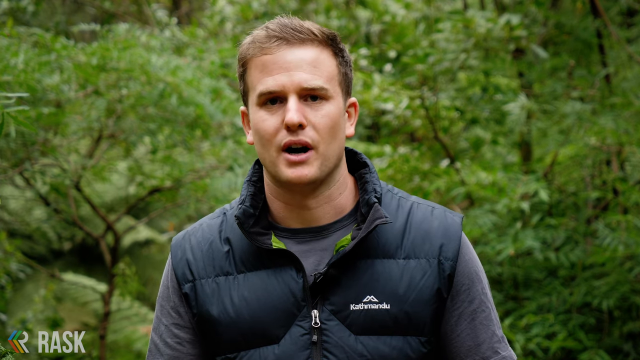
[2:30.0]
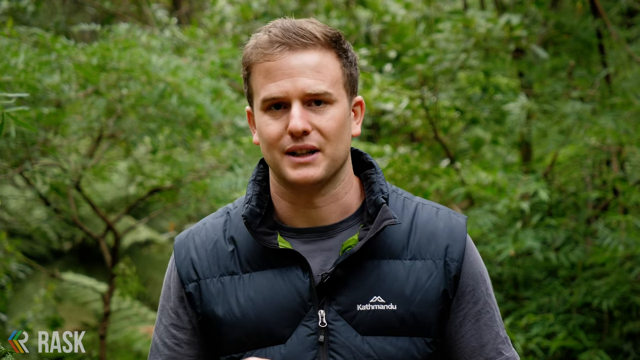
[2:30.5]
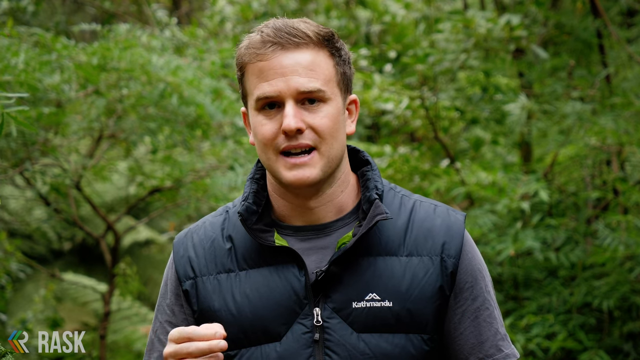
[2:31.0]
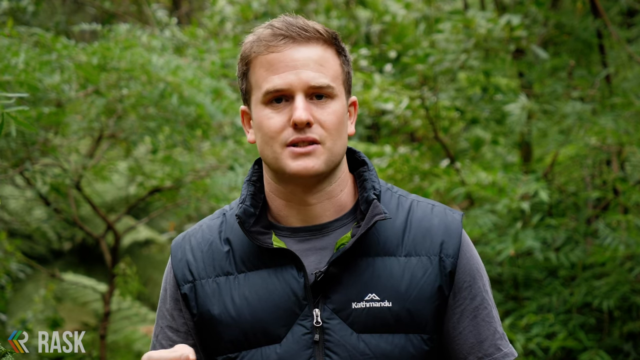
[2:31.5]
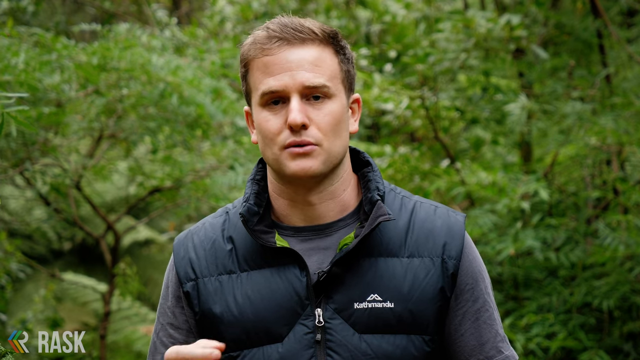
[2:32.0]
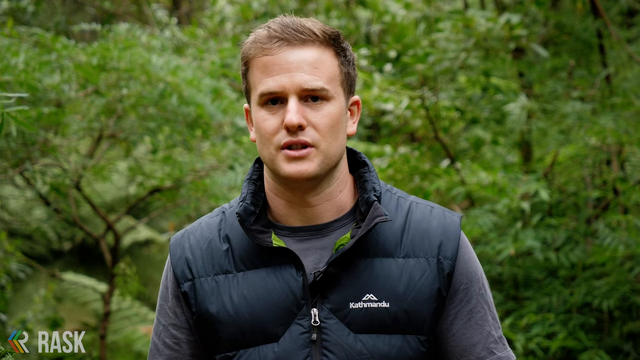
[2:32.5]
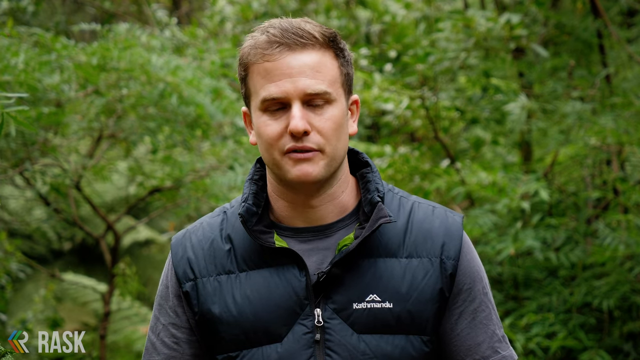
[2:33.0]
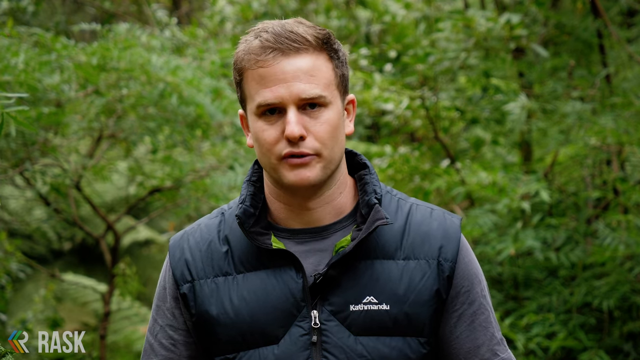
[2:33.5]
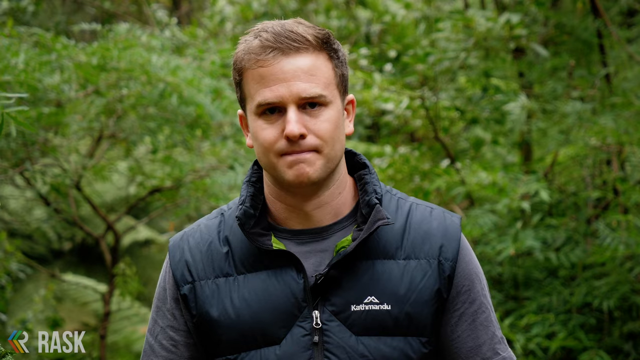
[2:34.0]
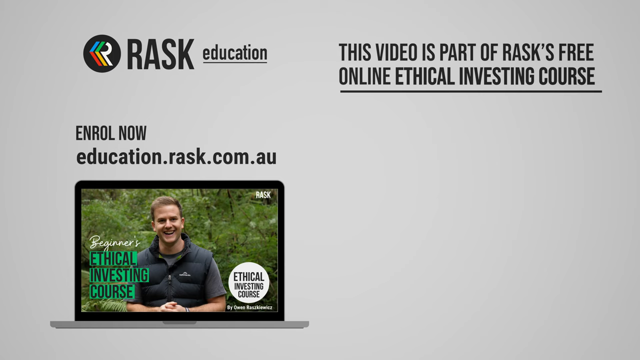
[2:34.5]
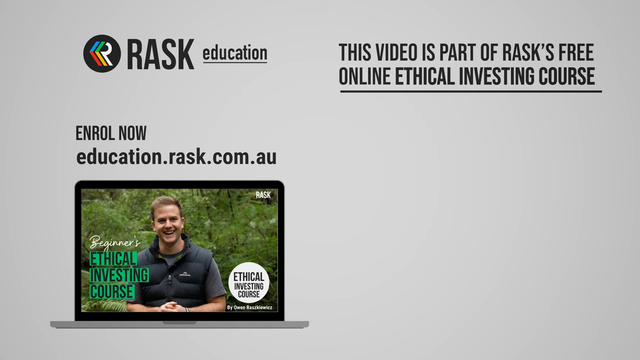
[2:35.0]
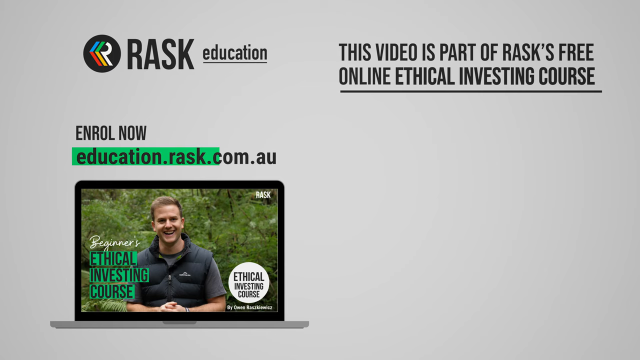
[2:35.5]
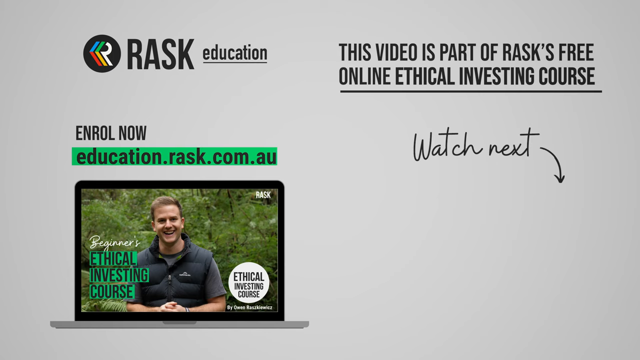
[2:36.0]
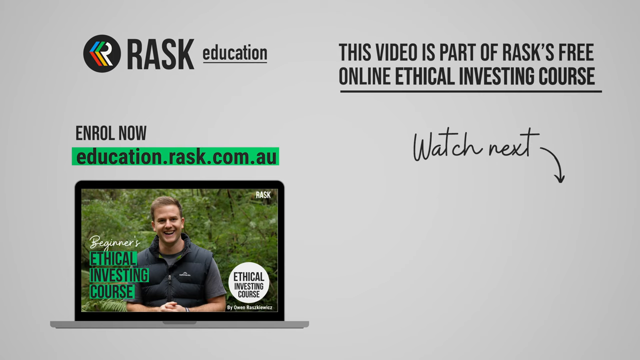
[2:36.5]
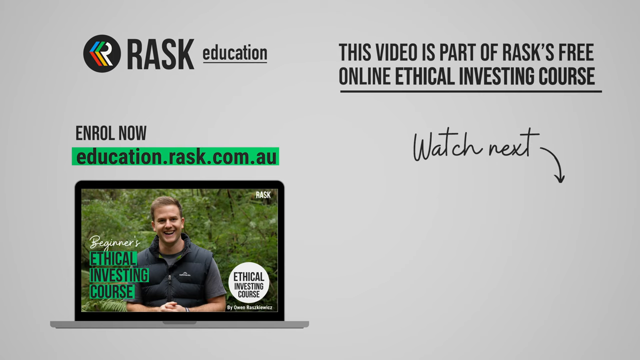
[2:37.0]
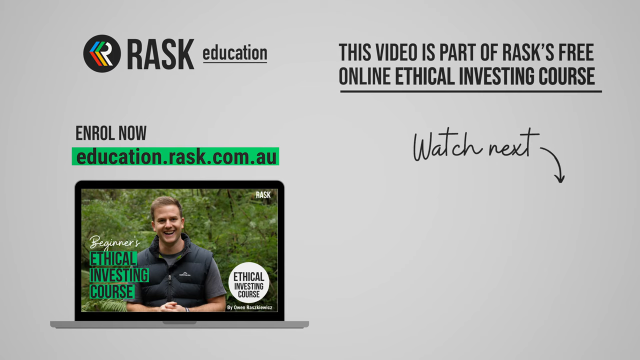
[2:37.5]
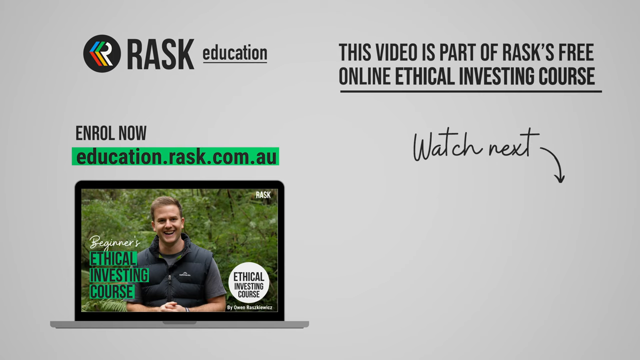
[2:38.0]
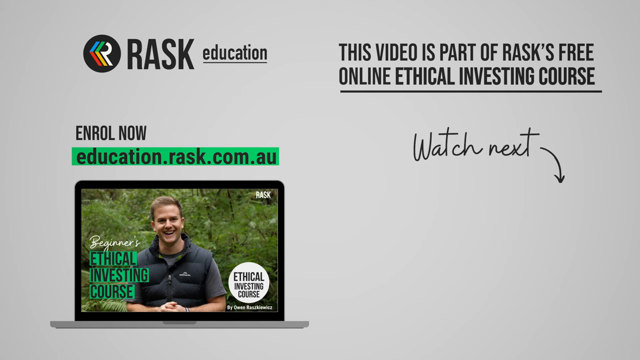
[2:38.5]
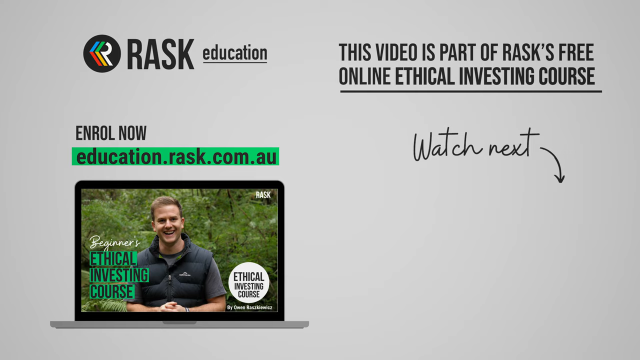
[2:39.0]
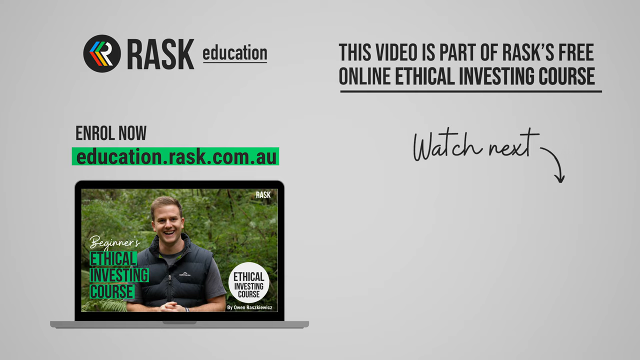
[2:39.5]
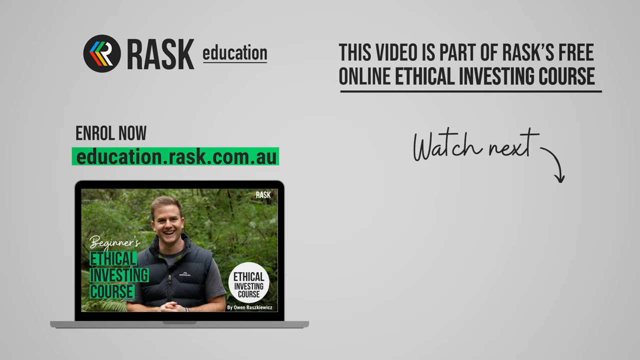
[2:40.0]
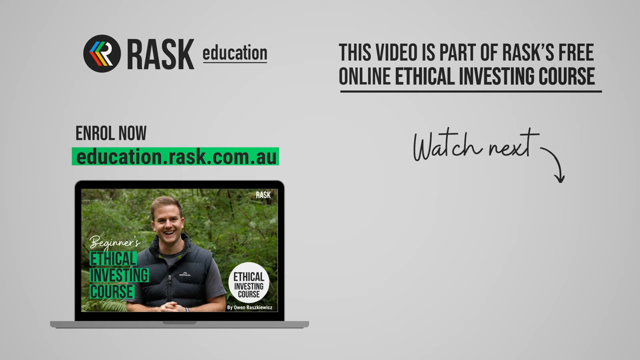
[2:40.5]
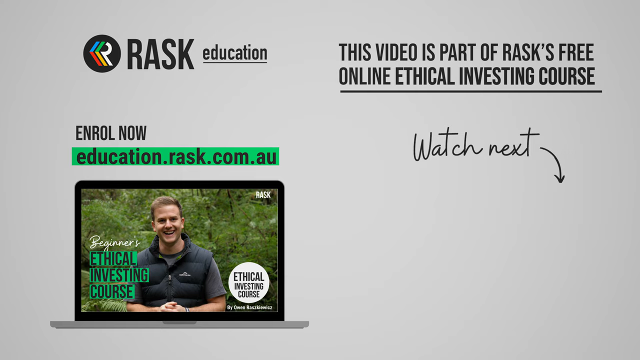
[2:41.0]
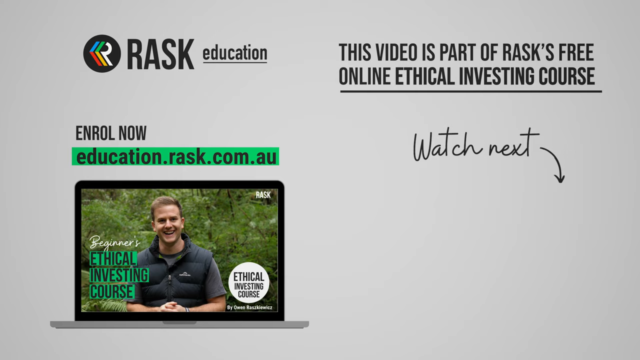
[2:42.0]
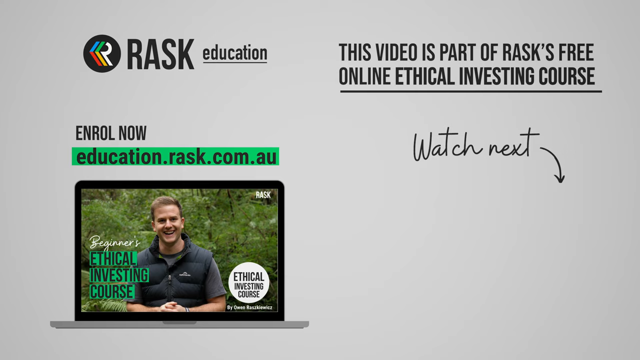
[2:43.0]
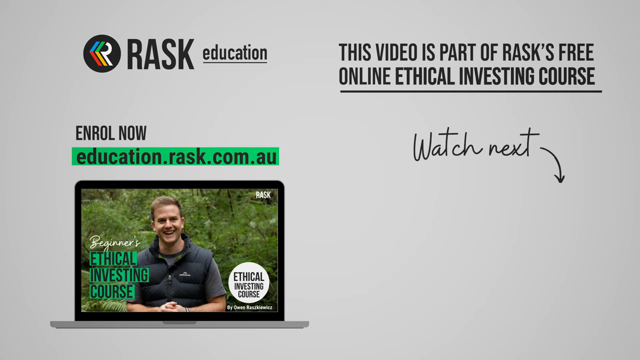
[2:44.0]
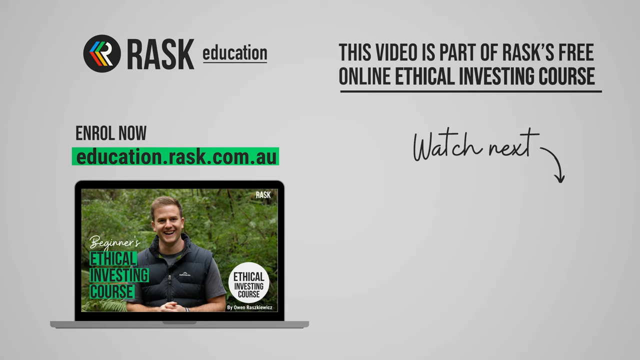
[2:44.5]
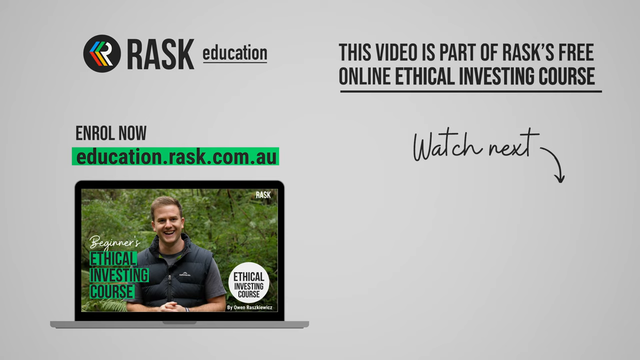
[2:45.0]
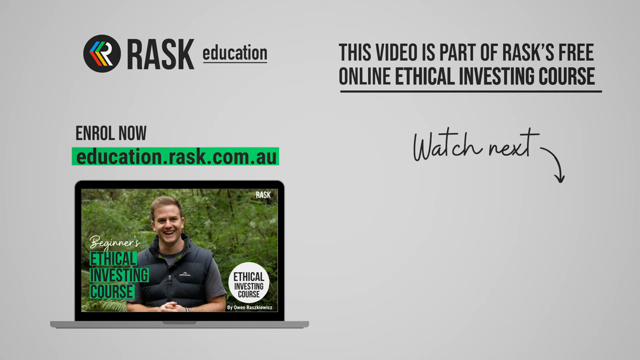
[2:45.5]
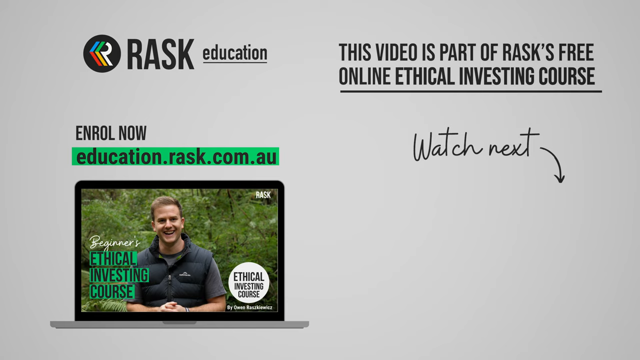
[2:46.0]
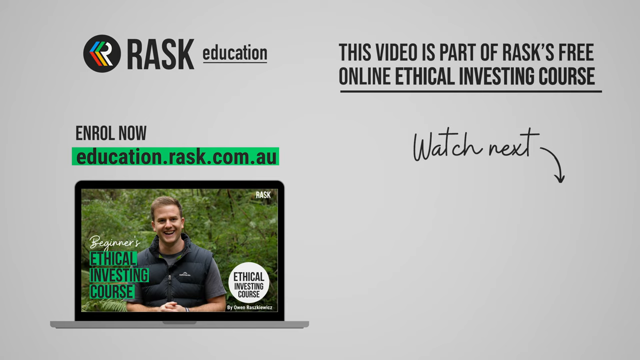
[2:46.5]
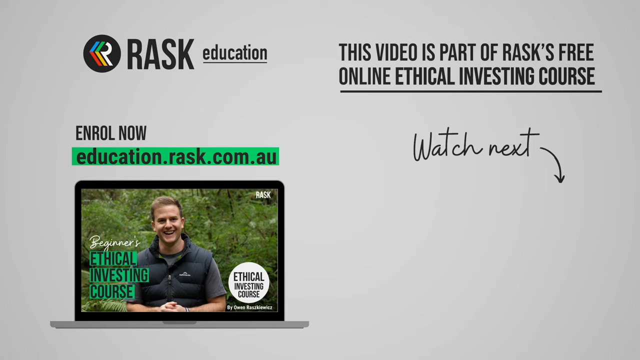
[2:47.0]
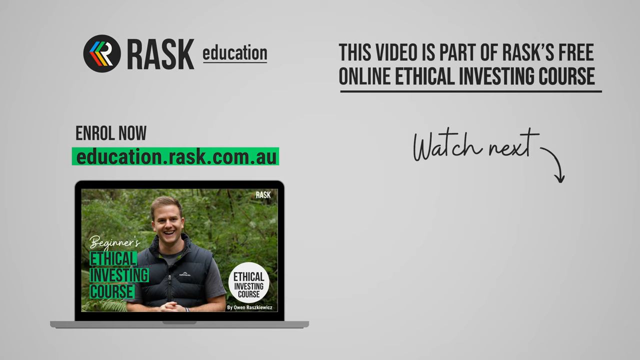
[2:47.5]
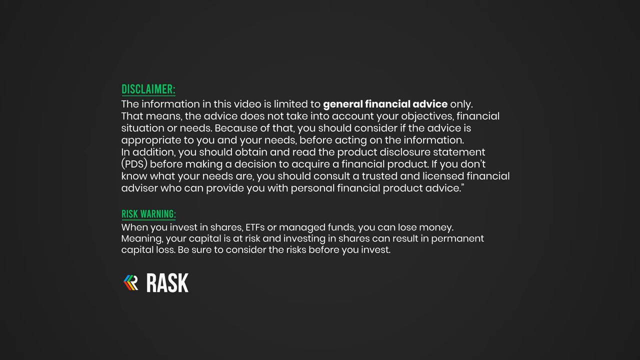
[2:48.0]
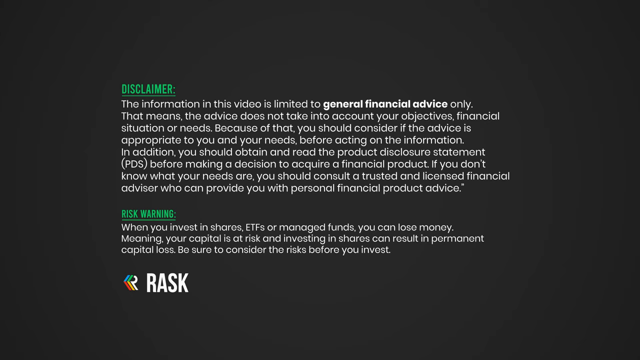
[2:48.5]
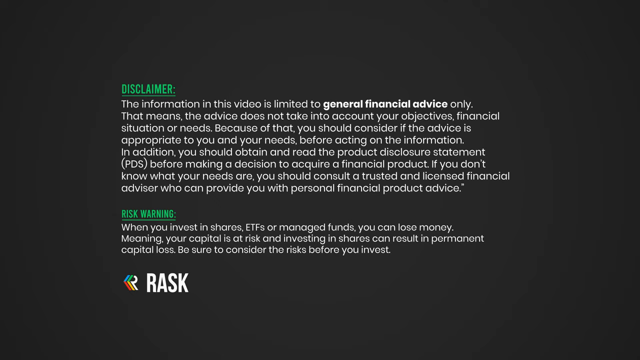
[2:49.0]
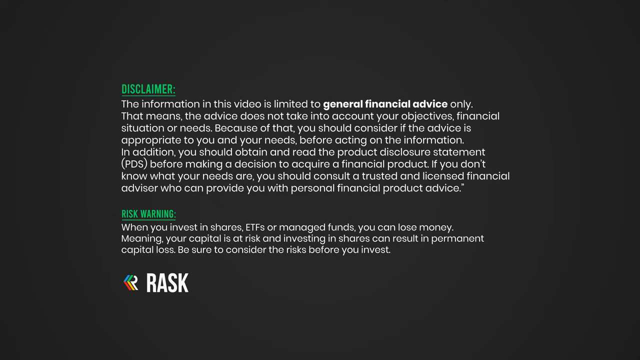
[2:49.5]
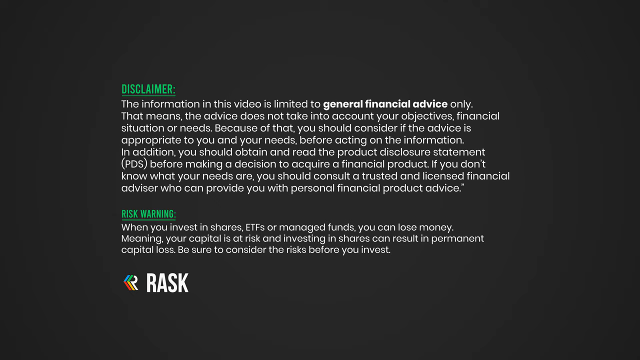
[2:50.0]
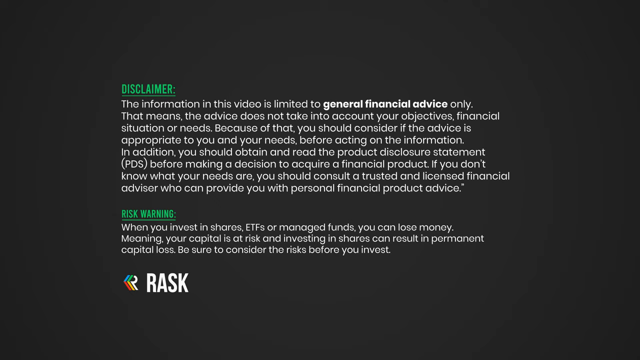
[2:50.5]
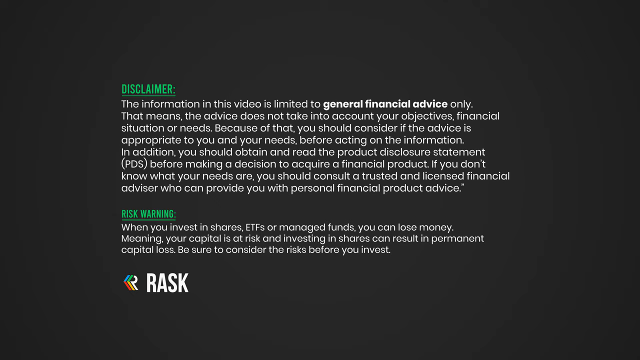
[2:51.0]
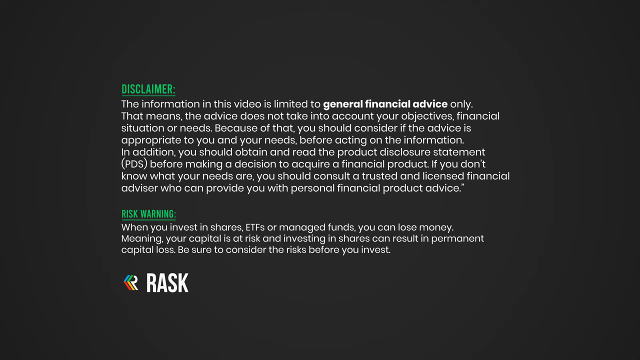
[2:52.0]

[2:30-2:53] The man finishes explaining as the video comes to its end. This is a Rask educational video about investment. On-screen text invites viewers to enroll now at education.rask.co.au. An index screen says "Ethical Investing Course, Beginners in Ethical Investing Course," and on its right-hand side it says "Ethical Investment Course." Text states that the video is part of the Rask Free Online Ethical Investment Course, and a direction says to watch the next video. A disclaimer is also on the screen: "The information in this video is limited to the general financial advice only. That means the advice does not take into account your objective financial situation or needs. This is a risk warning. When you invest in shares, ETFs or managed funds, you can lose money."